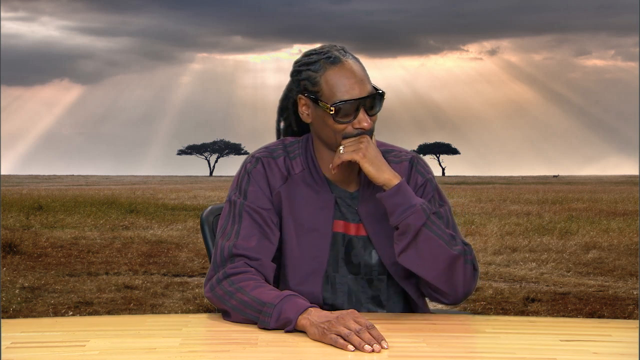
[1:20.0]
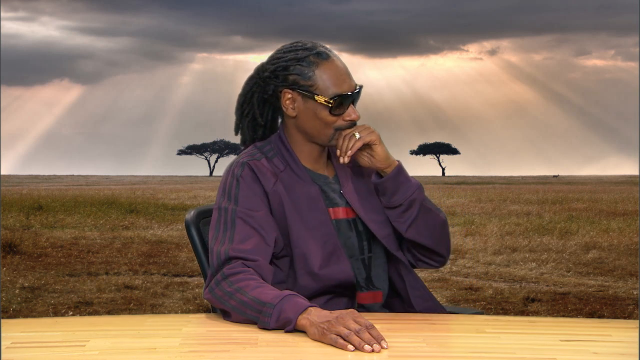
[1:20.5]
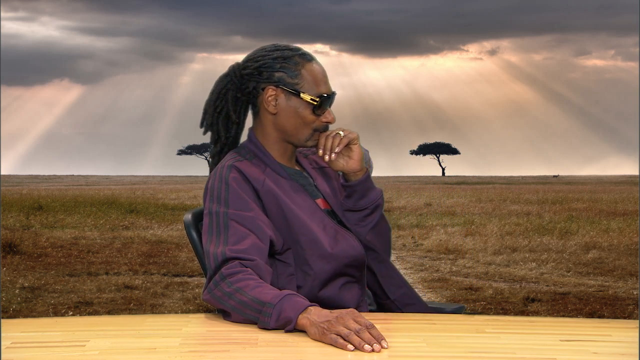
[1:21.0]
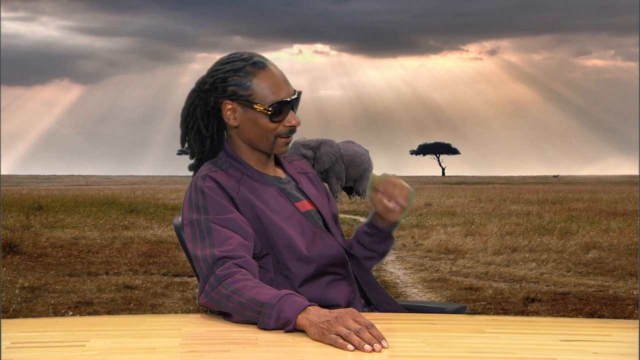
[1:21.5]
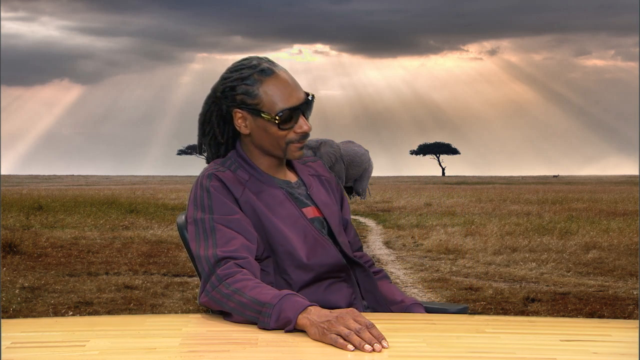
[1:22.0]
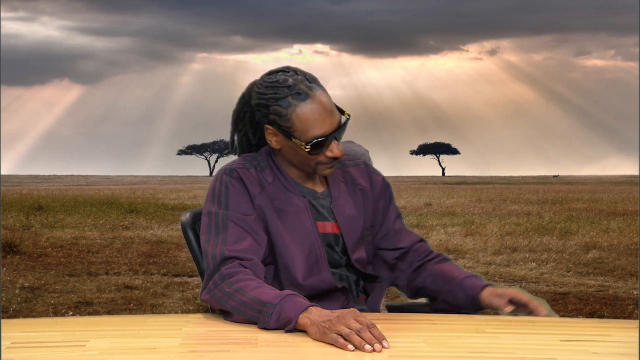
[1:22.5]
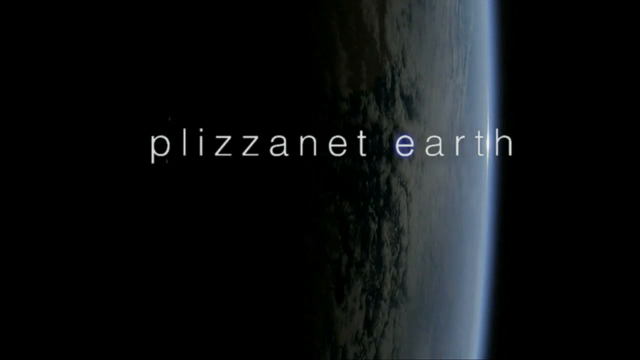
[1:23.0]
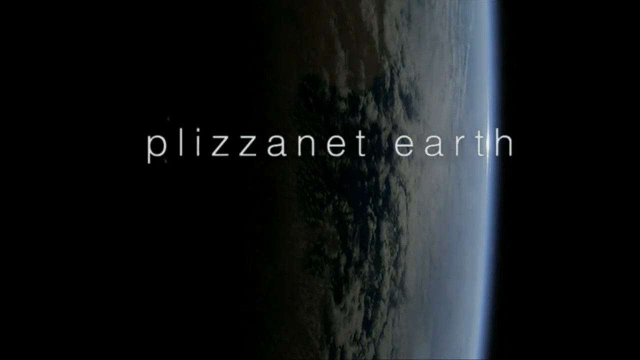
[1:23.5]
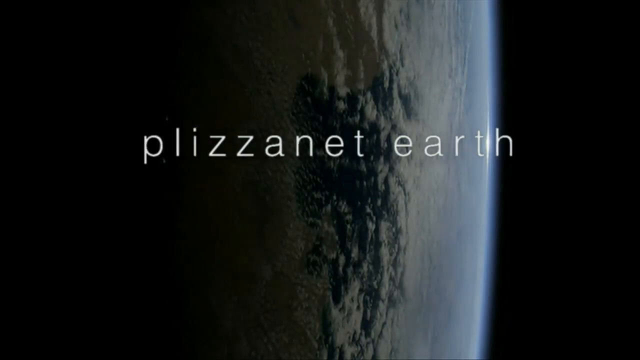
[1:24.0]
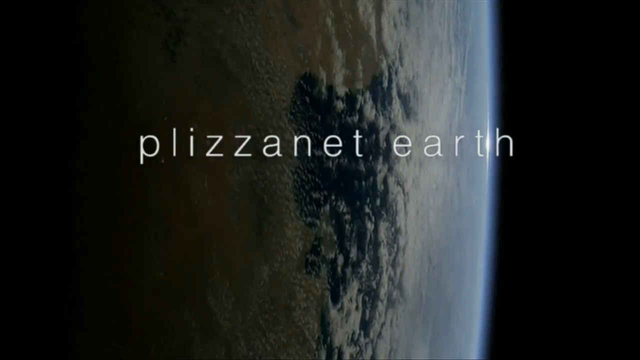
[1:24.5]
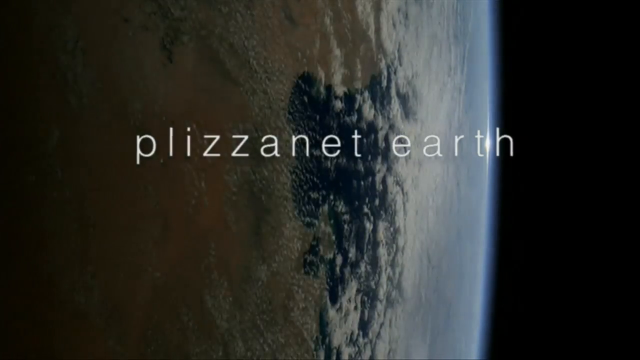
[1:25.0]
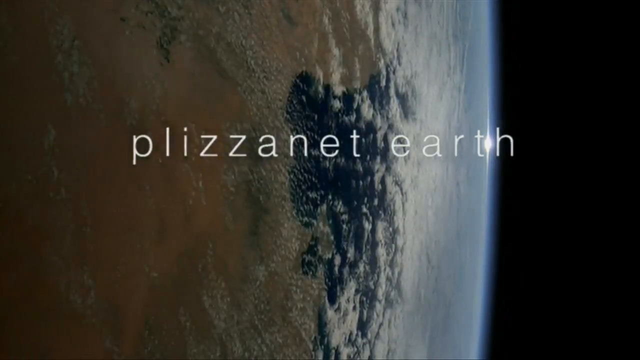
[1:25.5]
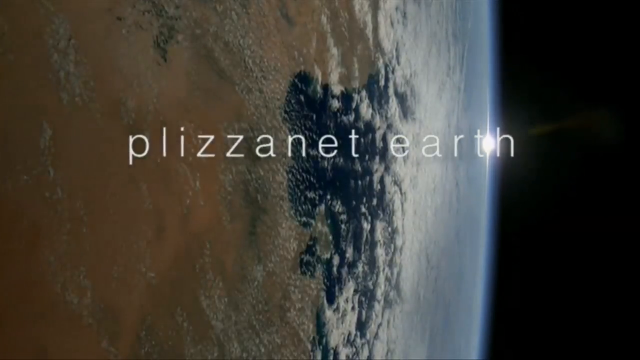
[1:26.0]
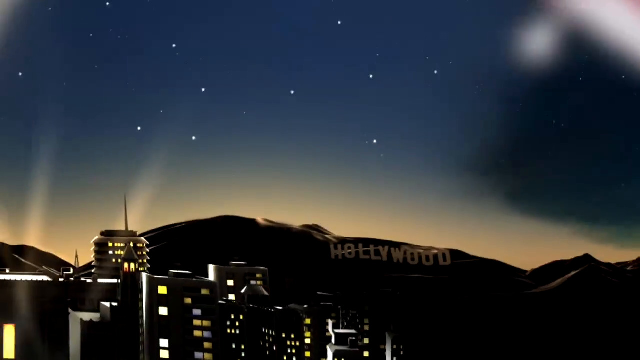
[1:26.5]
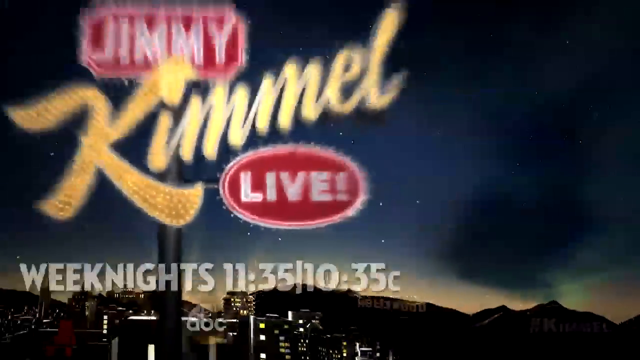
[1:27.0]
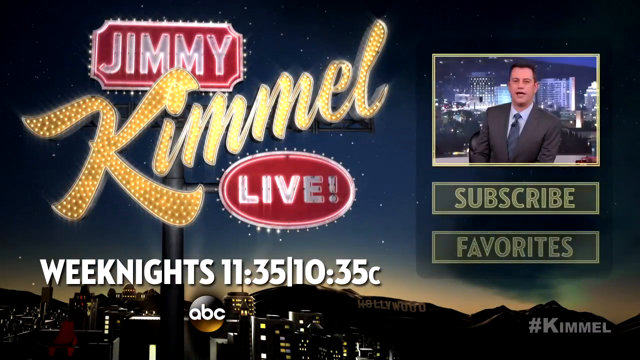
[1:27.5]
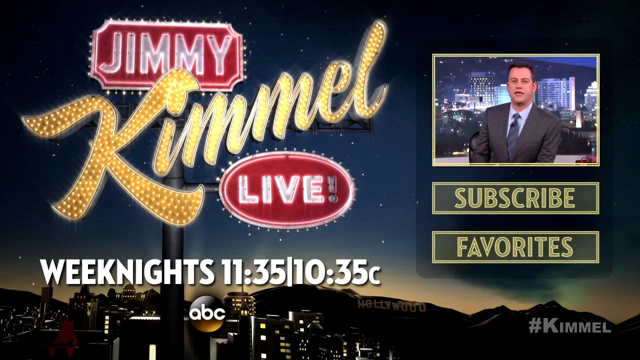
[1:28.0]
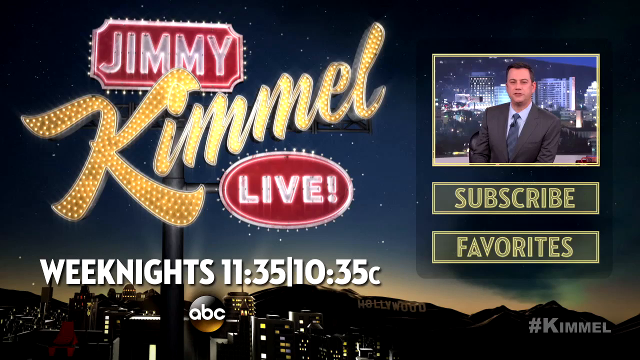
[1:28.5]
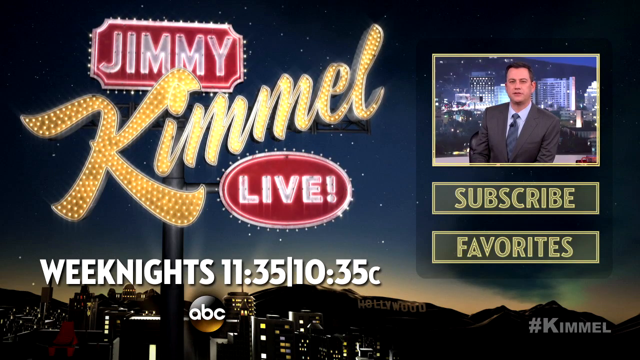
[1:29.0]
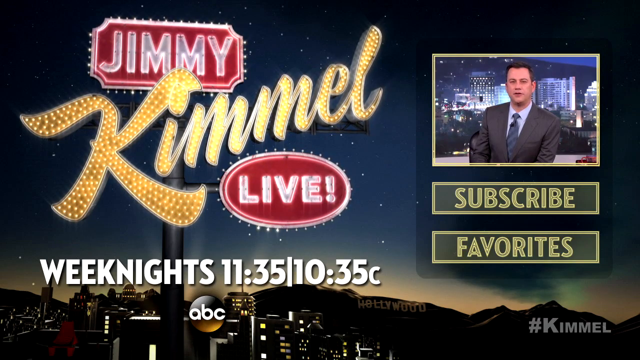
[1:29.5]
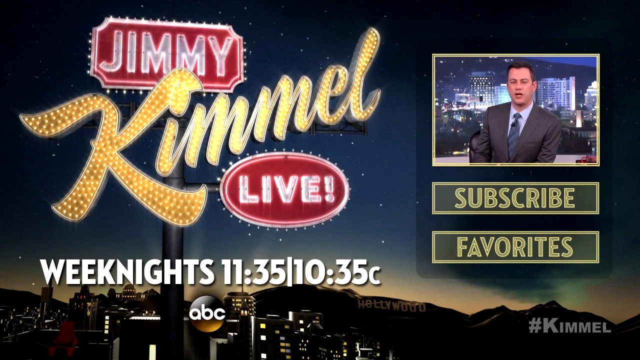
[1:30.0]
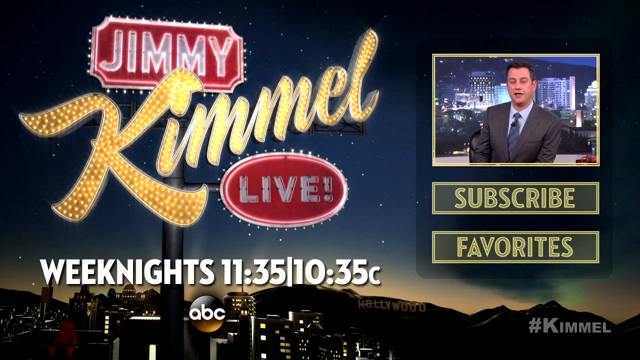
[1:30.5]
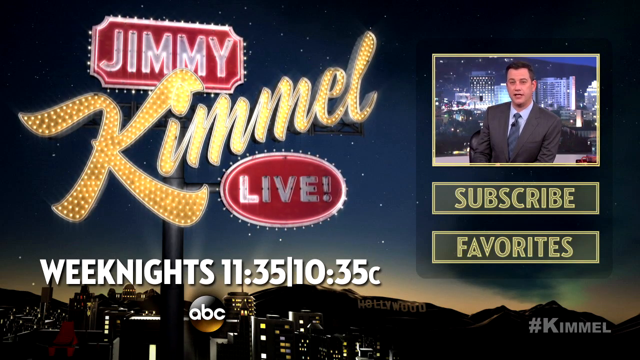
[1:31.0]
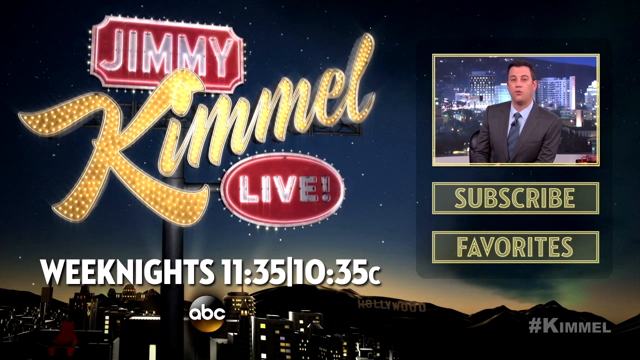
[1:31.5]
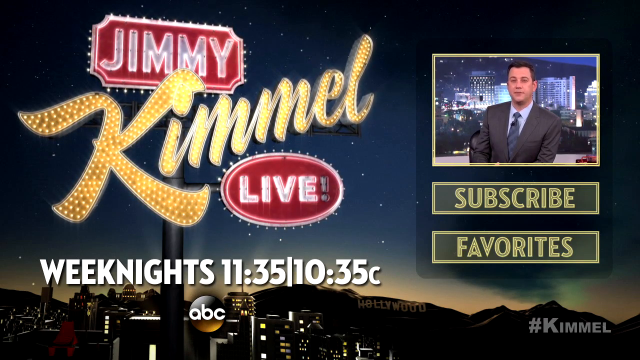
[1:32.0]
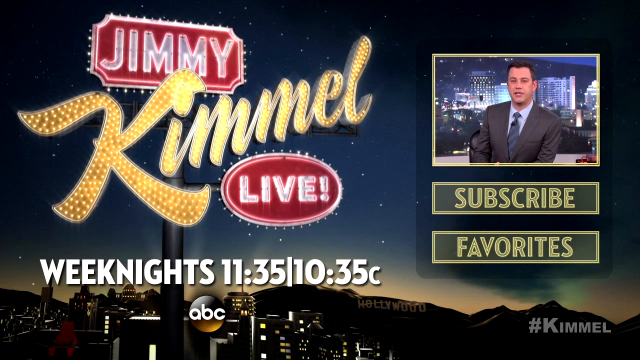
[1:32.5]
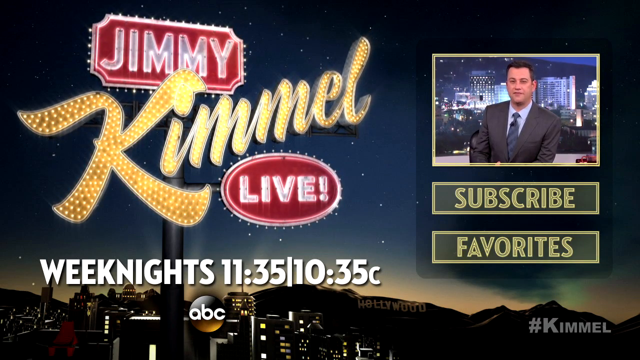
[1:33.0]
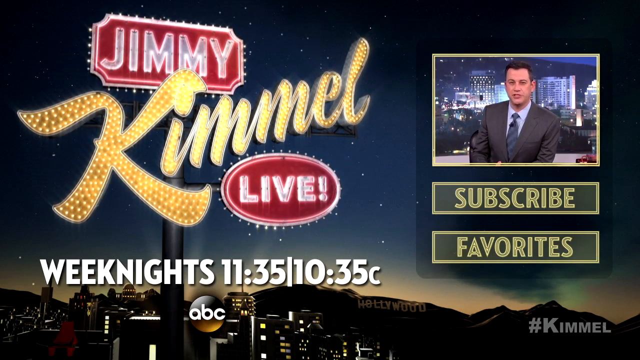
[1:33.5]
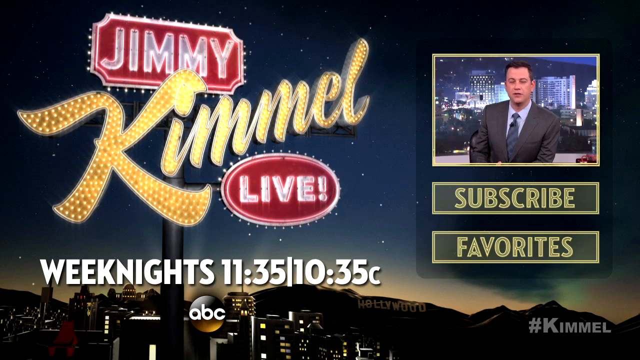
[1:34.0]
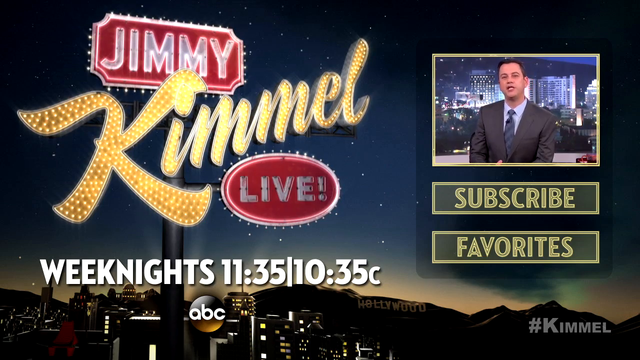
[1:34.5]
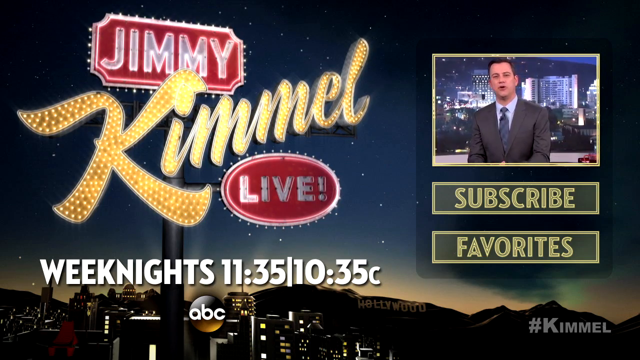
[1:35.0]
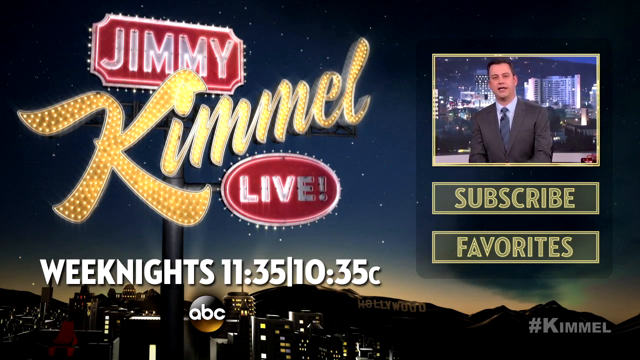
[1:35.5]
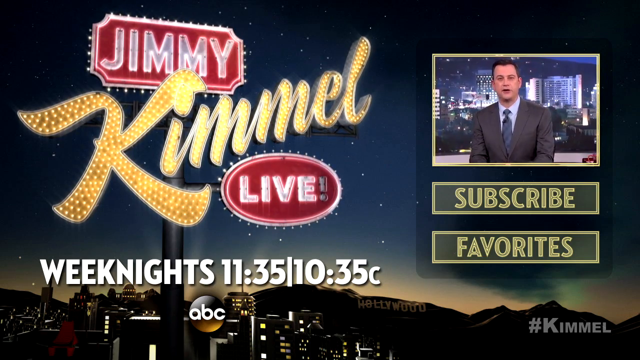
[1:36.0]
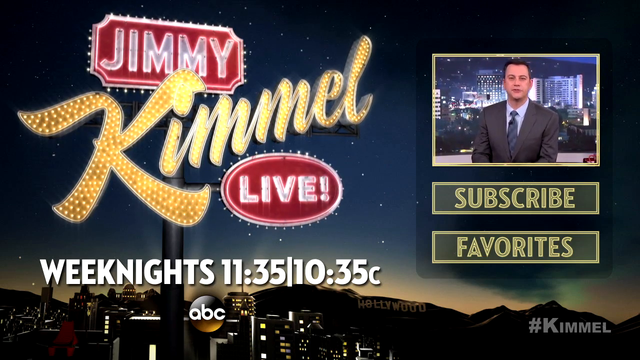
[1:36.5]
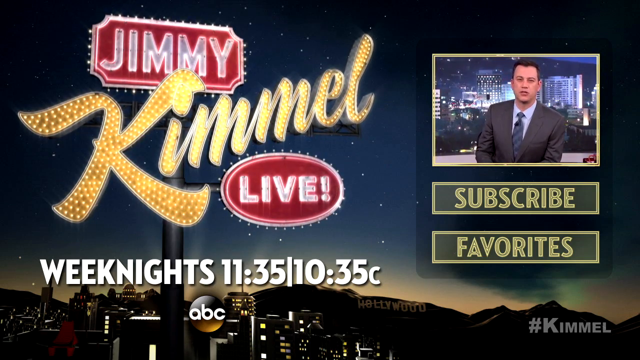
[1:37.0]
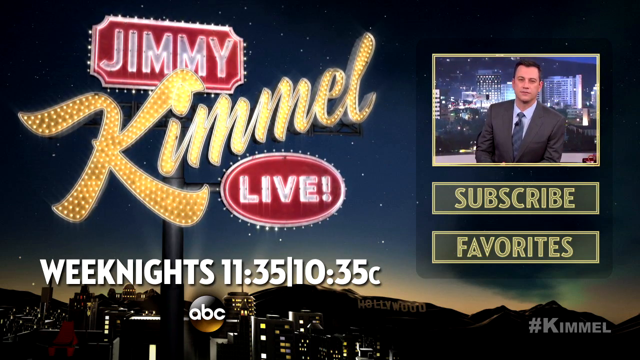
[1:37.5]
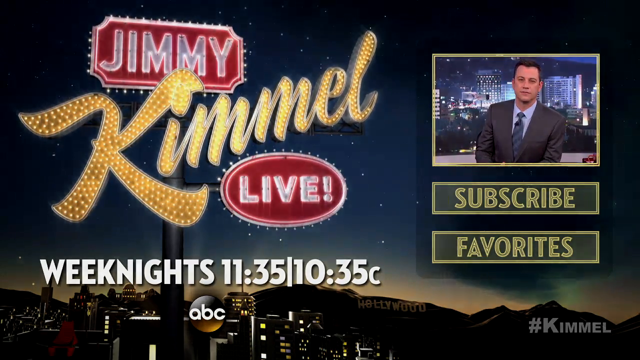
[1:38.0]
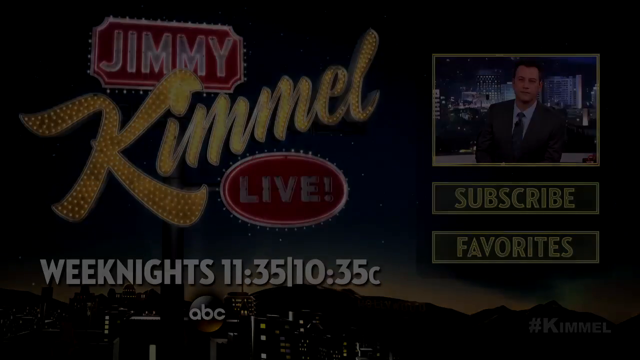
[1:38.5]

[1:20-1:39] The person shakes his head and seems very sad. After that, a logo appears, followed by end-screen items including "subscribe" and "favorite".